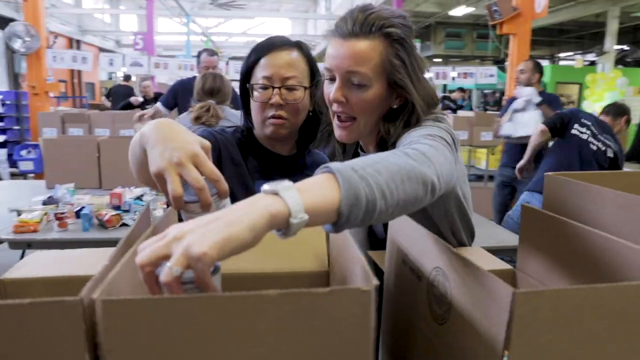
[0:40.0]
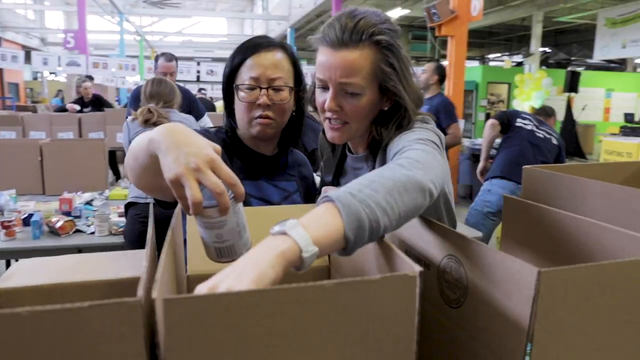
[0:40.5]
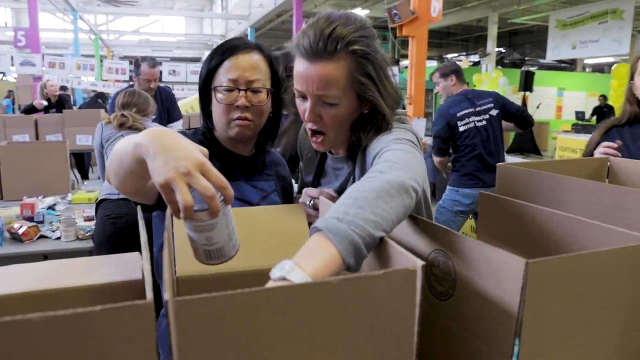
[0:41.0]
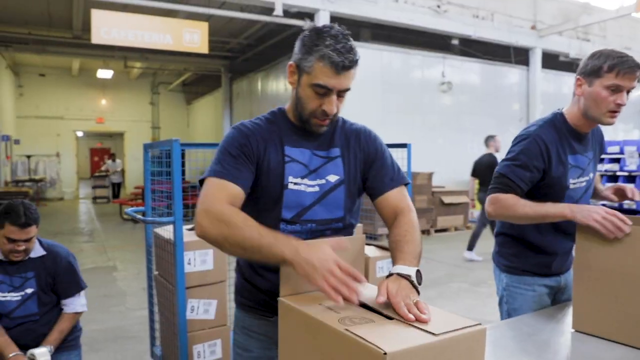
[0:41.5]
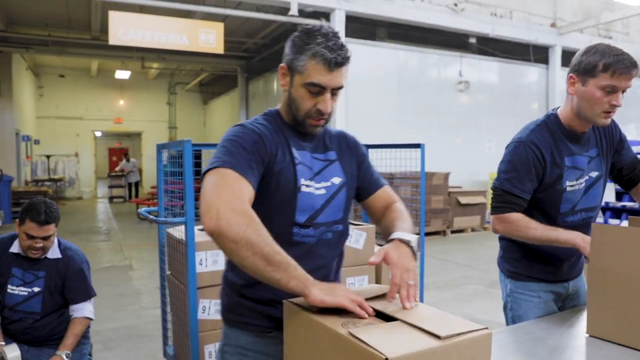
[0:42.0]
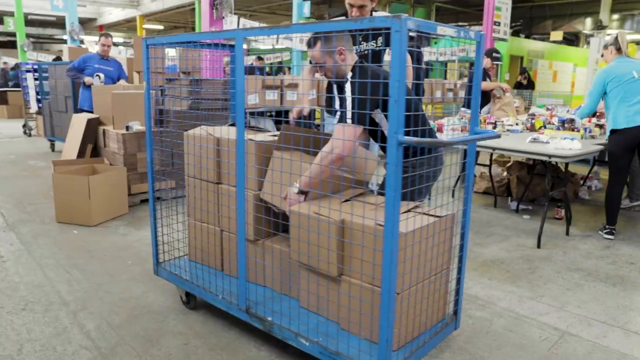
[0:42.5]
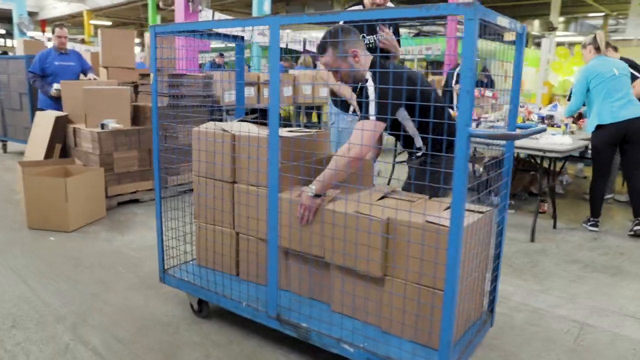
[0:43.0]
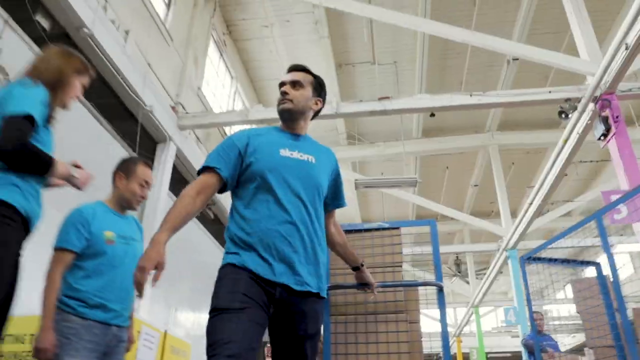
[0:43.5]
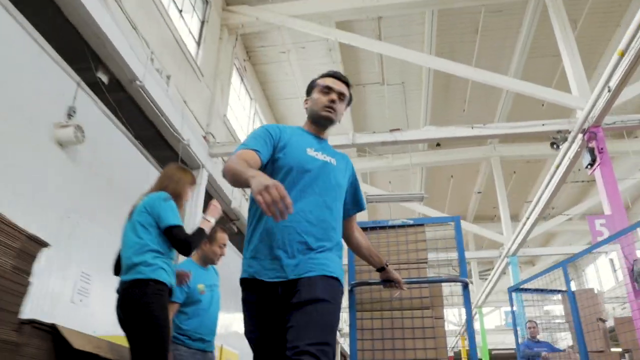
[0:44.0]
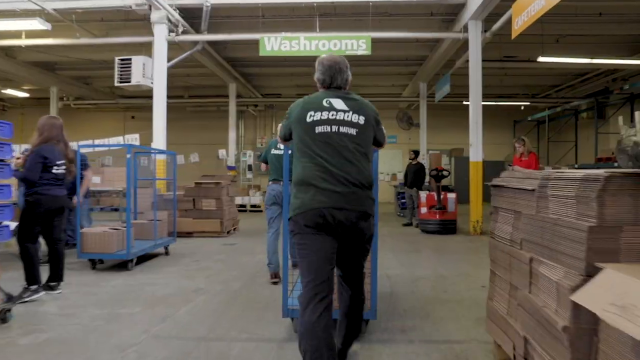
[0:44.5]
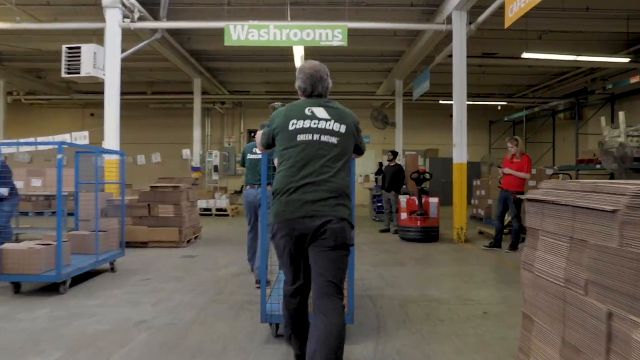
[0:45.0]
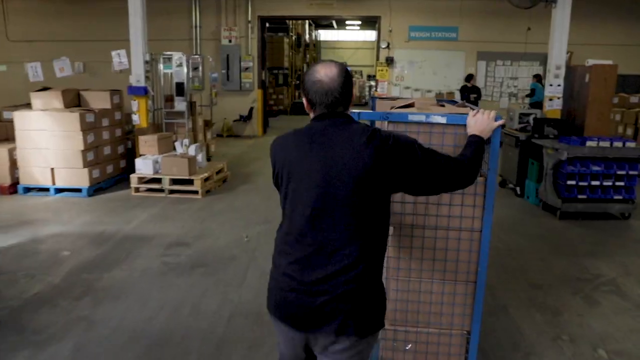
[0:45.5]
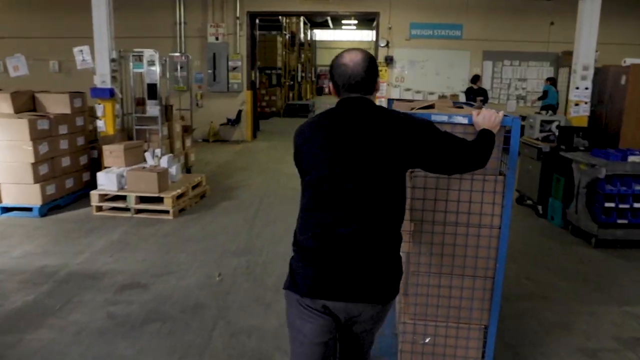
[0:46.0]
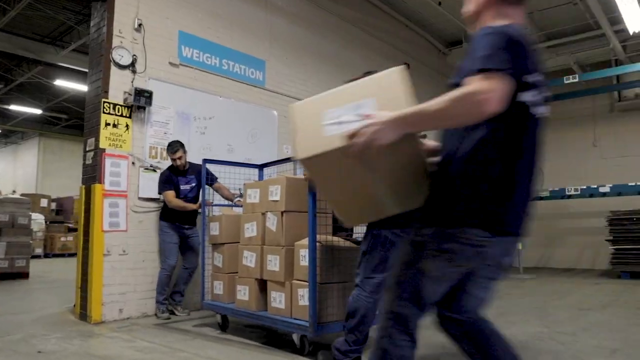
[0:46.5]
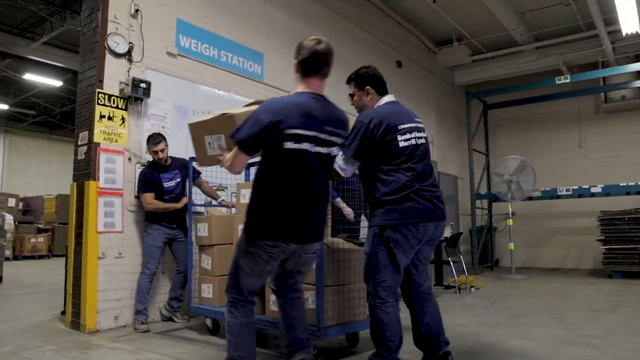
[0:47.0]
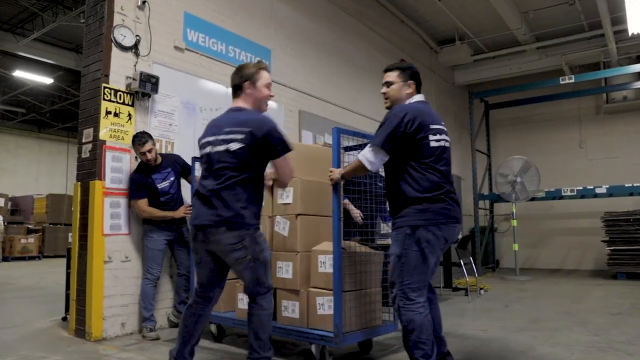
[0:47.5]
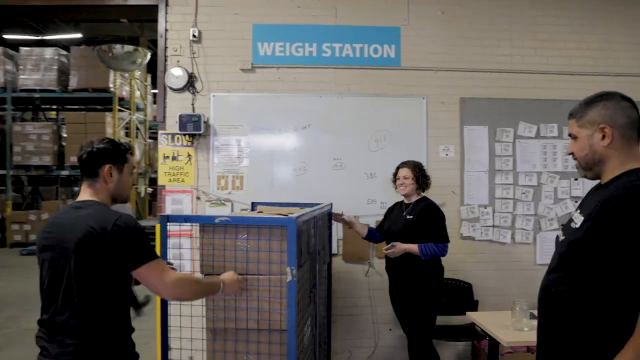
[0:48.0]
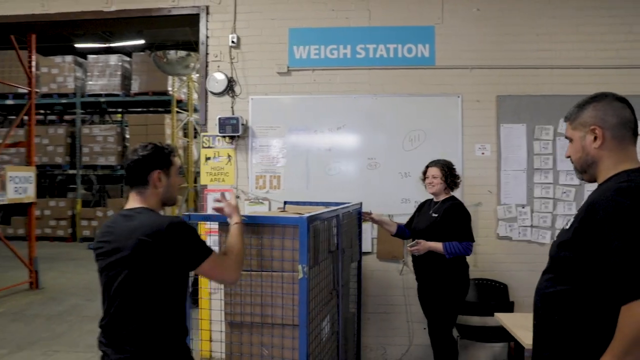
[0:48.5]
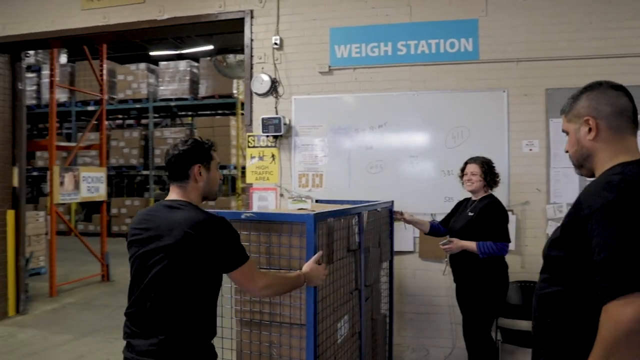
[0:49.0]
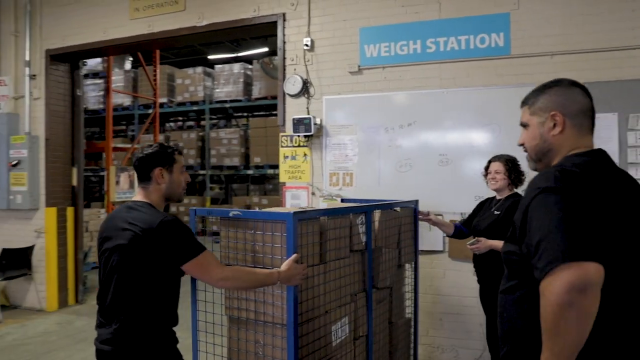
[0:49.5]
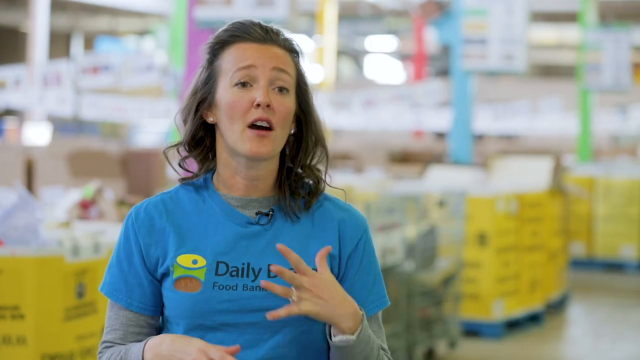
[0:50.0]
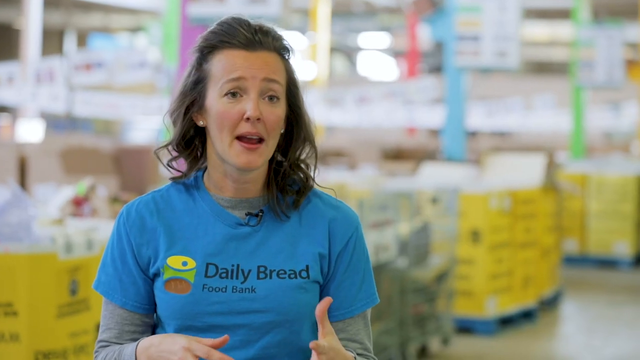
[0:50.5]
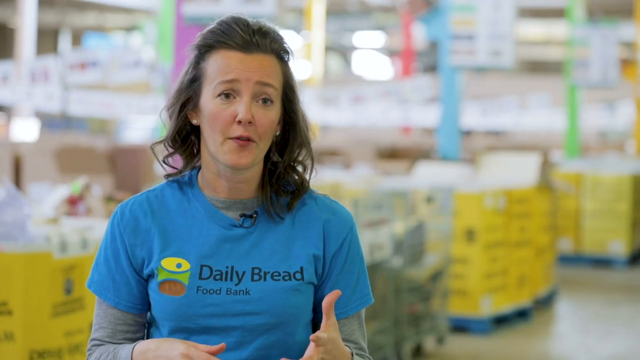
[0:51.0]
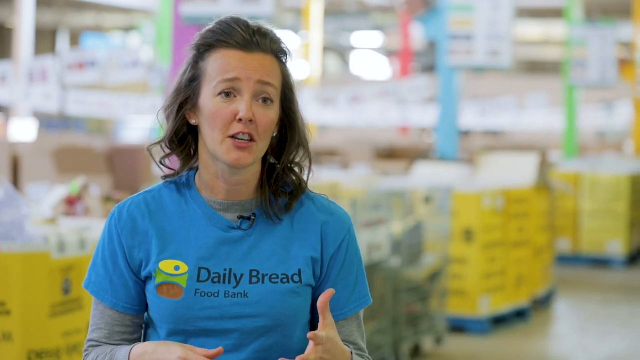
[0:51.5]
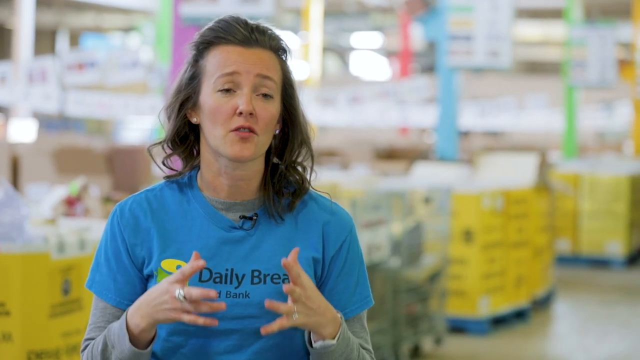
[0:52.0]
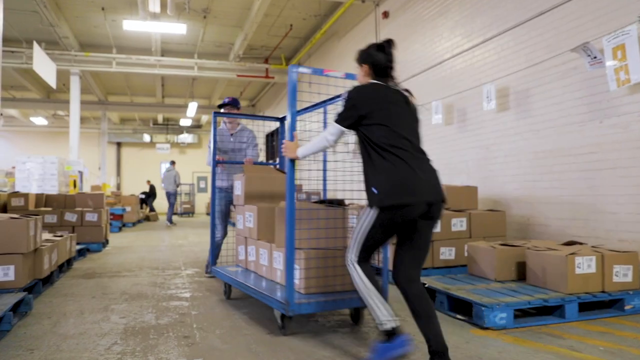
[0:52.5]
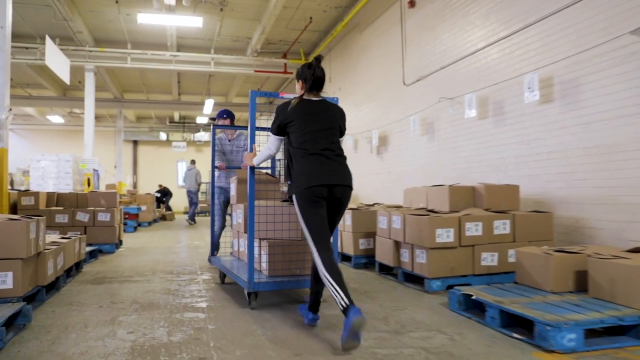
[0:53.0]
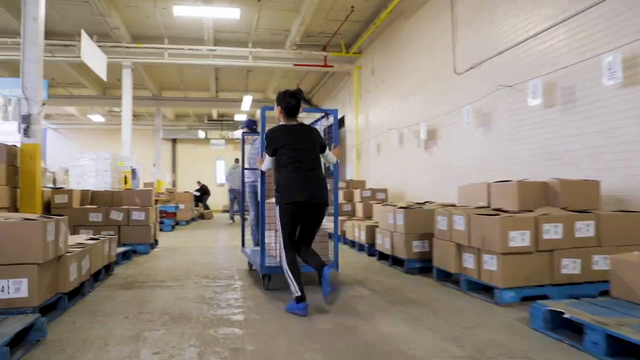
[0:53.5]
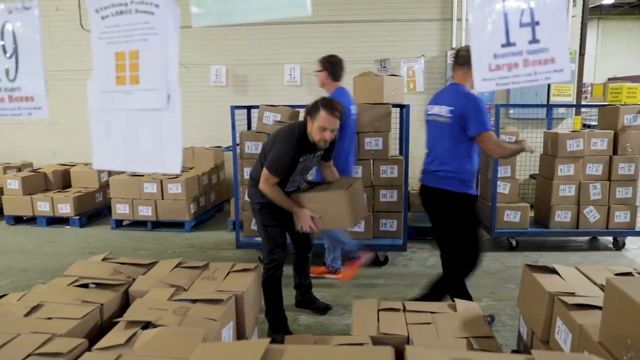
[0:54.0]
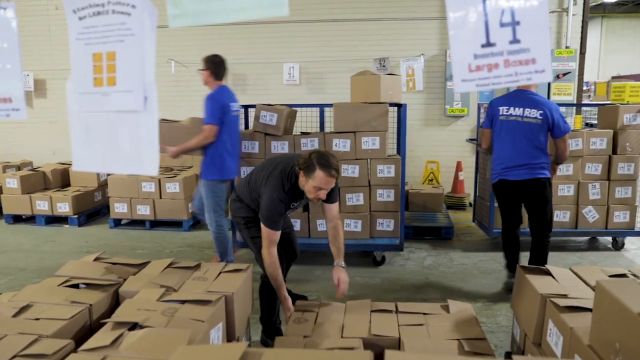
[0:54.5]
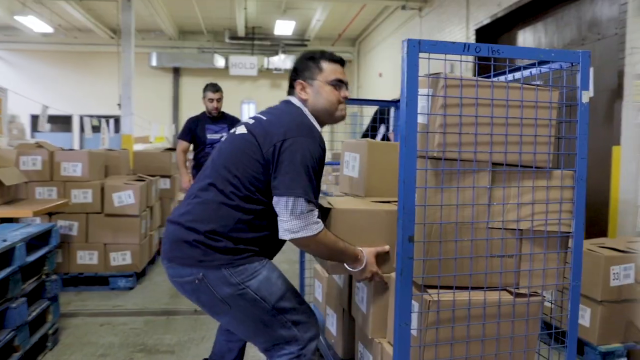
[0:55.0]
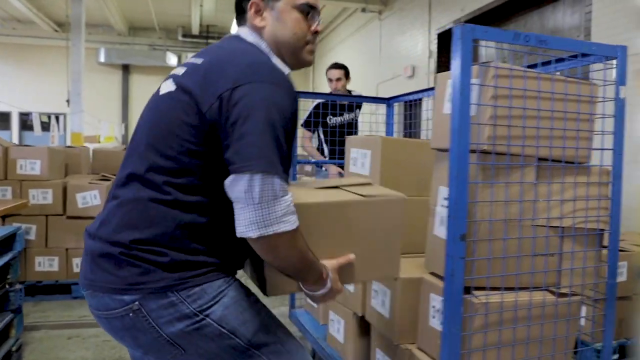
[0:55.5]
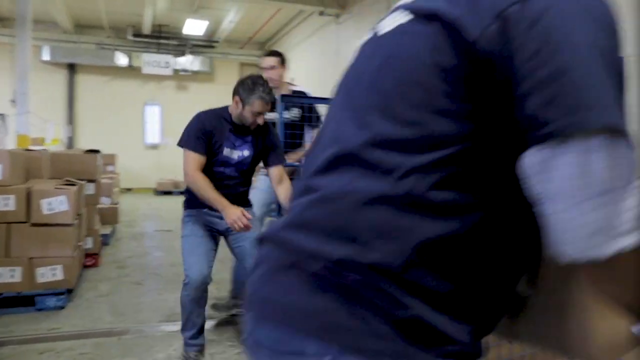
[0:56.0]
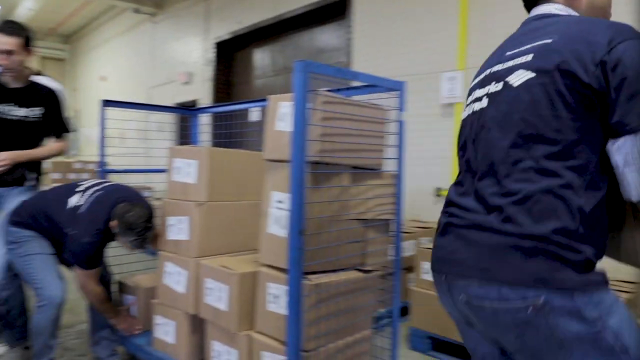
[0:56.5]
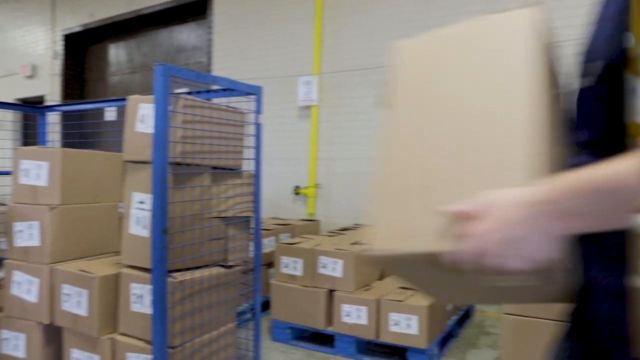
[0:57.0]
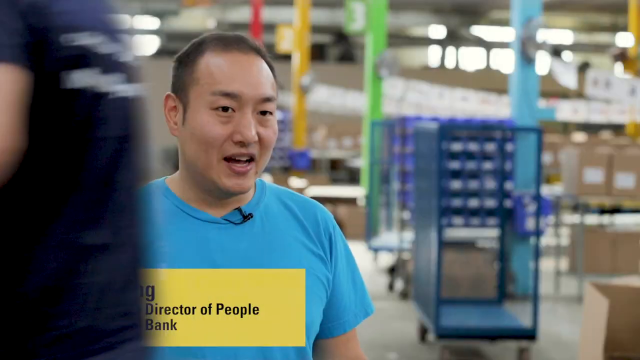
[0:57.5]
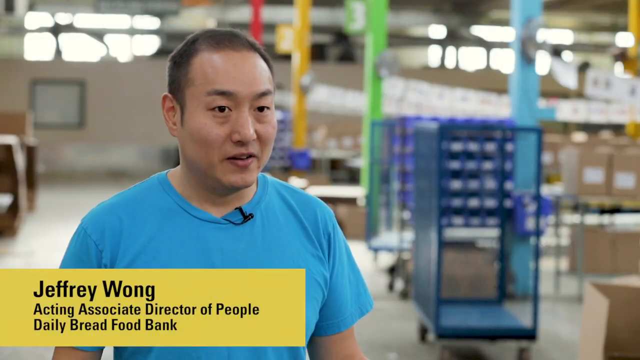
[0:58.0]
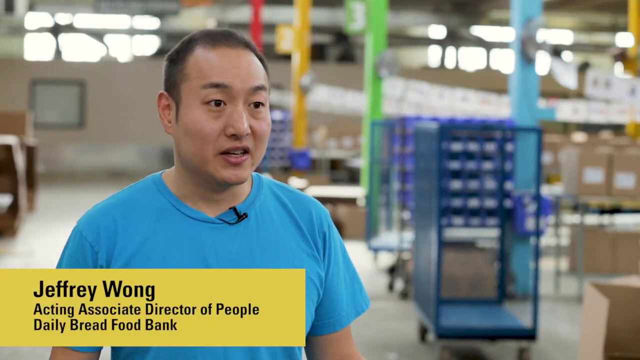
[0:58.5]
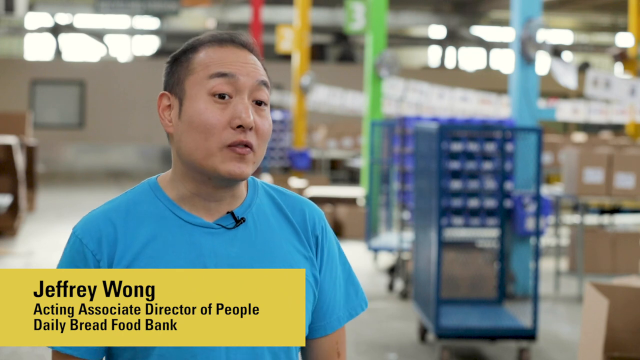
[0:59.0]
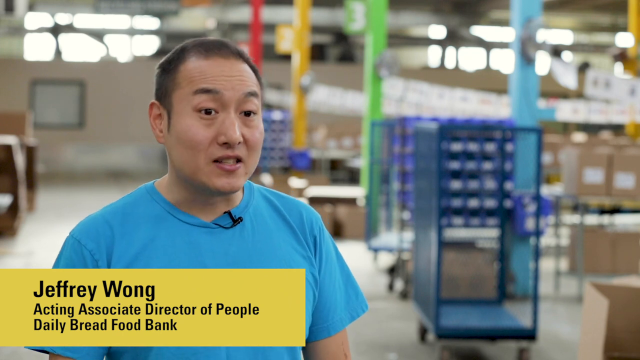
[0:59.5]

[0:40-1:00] What appears to be a type of warehouse has many boxes all over the place. Two females are in the foreground. The one on the left, at the center of the screen, has black hair and black-framed glasses and holds a can up, looking at it. The other female is right next to her, less than a foot apart, with hair that is a mixture of colors, kind of dishwater blondish or grayish, possibly a frost treatment or possibly because she is a little older. She wears a gray long-sleeve sweater and a white watch on her left wrist, and she also holds a can and looks at it. Both pull cans out of a box in front of them. Next, three men are shown. One in the bottom left corner of the screen wears a dark blue top and glasses, has black or dark brown hair, and looks like he is sitting and looking at something. The man in the middle also wears a dark blue shirt, has grayish-black hair, and has a five o'clock shadow or slight beard. Another male is to his right. They all appear to be handling boxes, putting things in them or taking them out, working in some kind of warehouse.